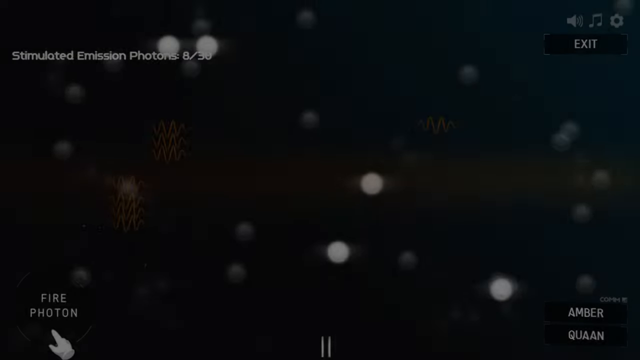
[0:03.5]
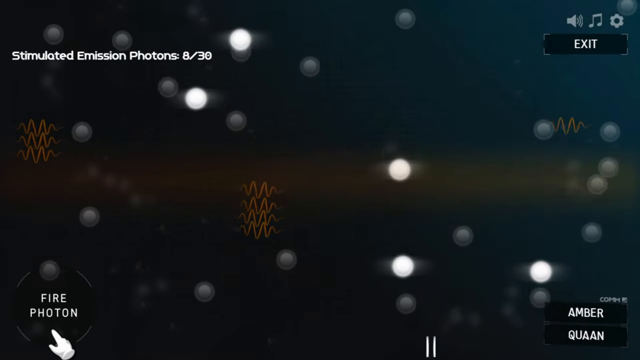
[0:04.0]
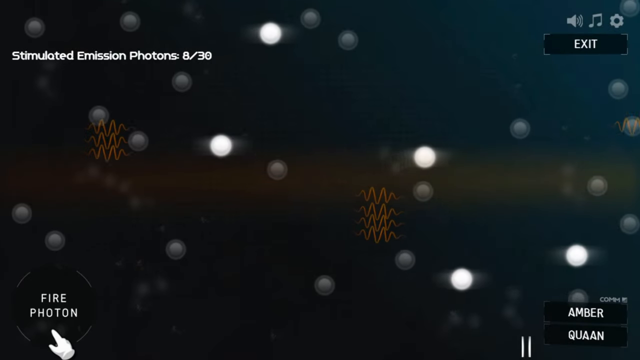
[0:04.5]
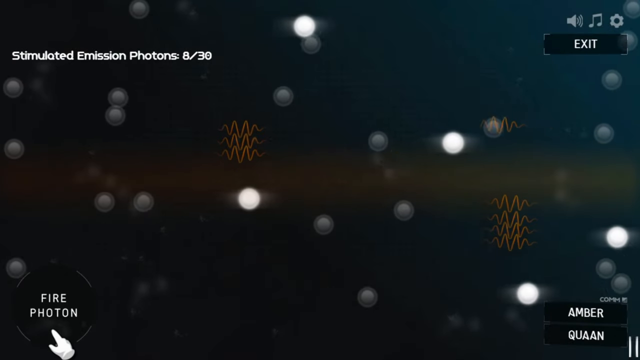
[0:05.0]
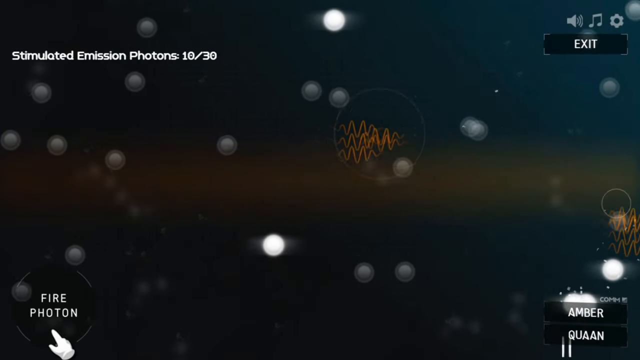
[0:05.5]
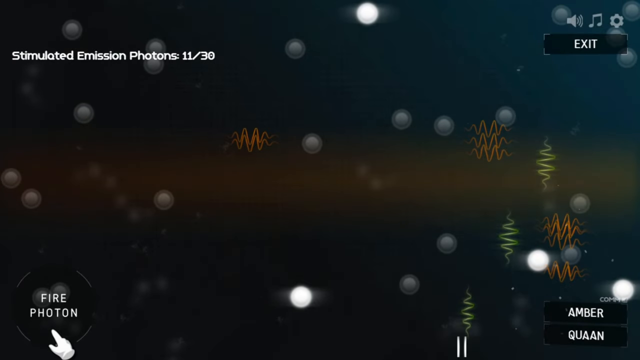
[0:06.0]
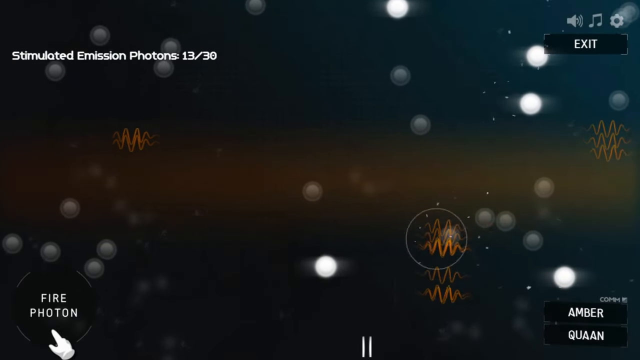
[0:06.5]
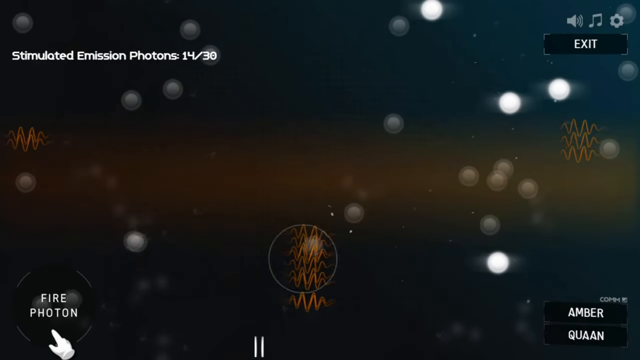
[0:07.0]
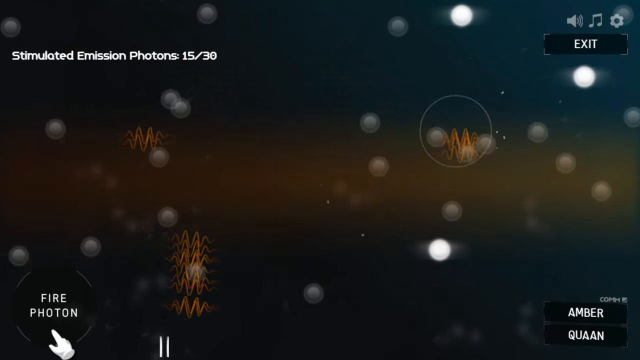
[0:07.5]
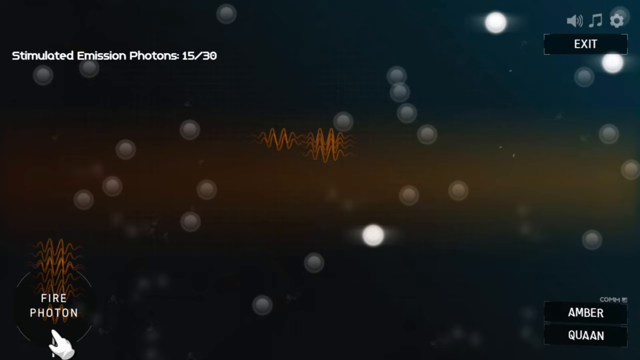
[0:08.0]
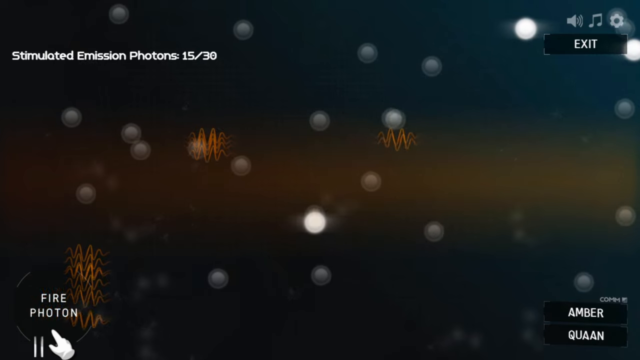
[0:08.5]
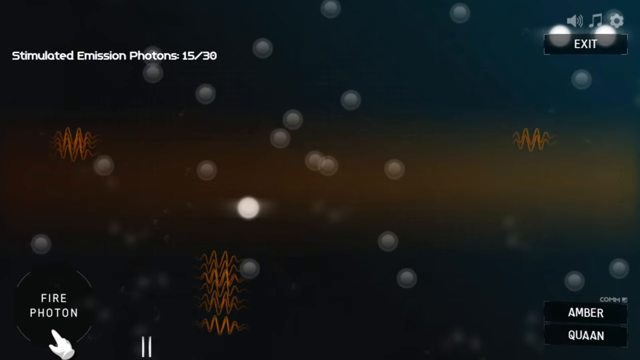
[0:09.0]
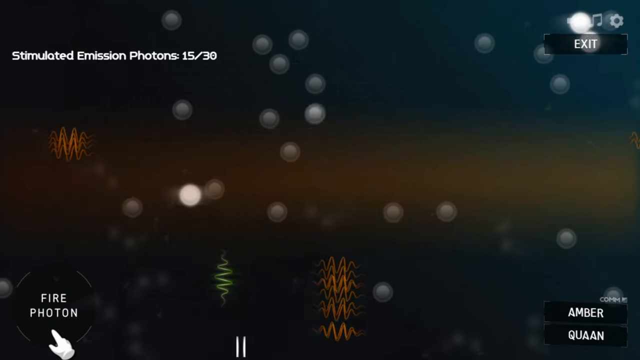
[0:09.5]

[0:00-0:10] The video begins with a black screen on which white lights fade in at random places. In the upper right-hand corner, white writing reads "simulated emission photons" with a count out of 30. White writing in the bottom left reads "fire photon", the bottom right corner reads "Amber Juan", and the upper right corner reads "Exit". The white circles move around continuously in the background. Wavy lines also begin to appear and move around; some are red and others are more yellow. The yellow zigzags tend to shoot very quickly upward from the bottom toward the top, while the red zigzags move across the screen, some left to right and others right to left, with no real pattern to their movements.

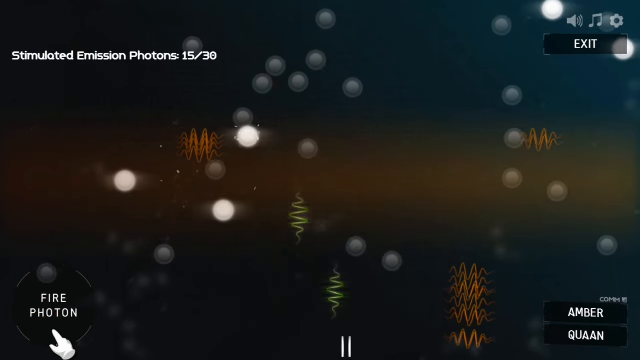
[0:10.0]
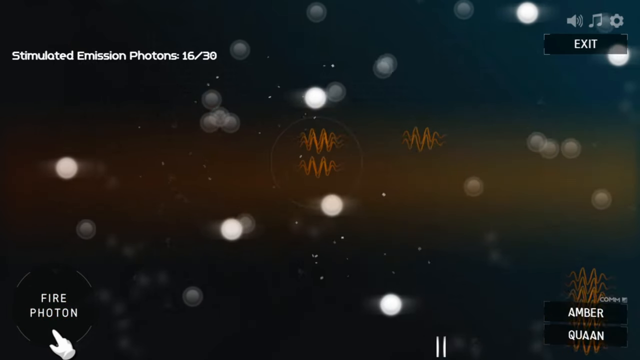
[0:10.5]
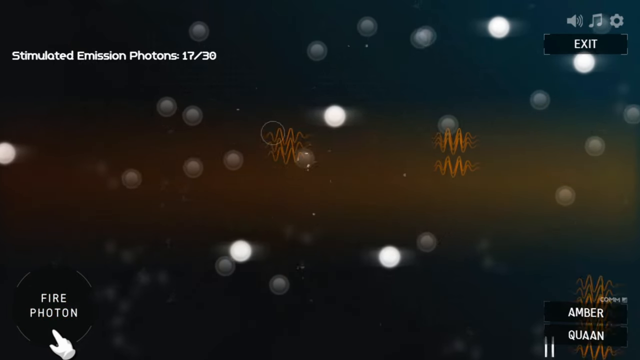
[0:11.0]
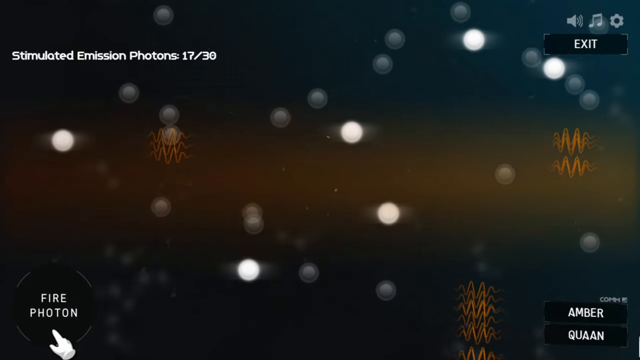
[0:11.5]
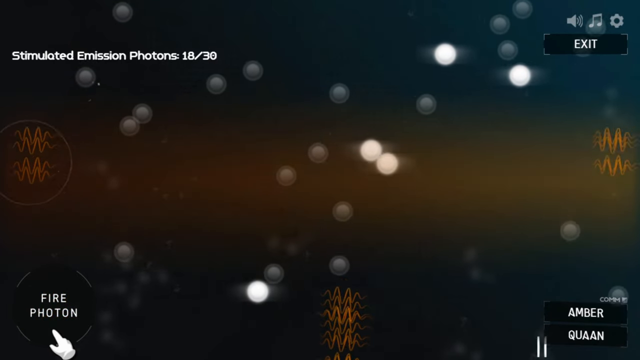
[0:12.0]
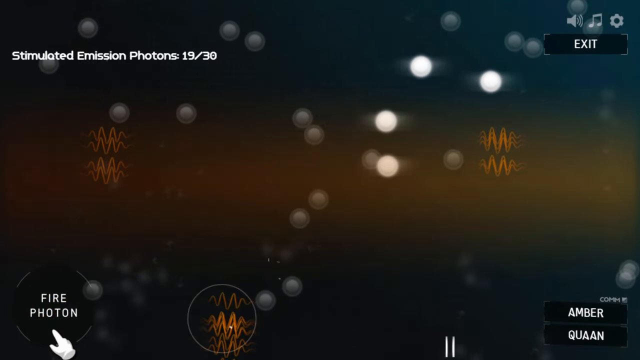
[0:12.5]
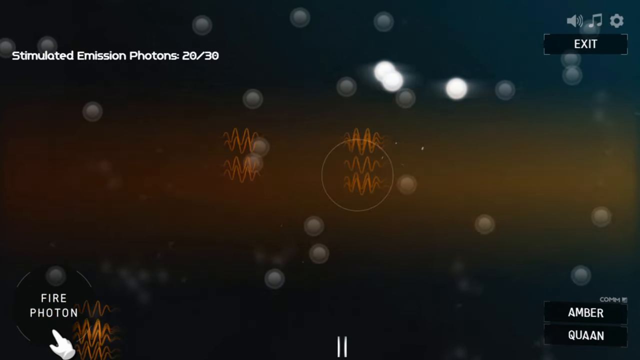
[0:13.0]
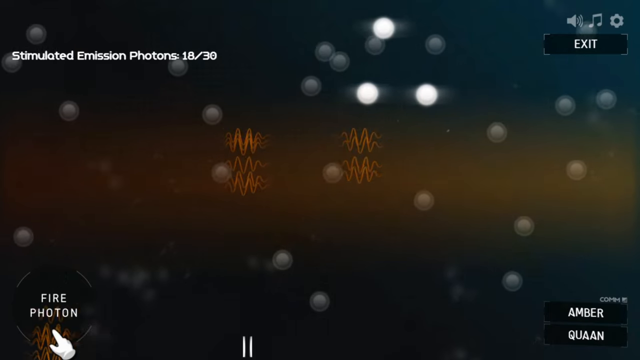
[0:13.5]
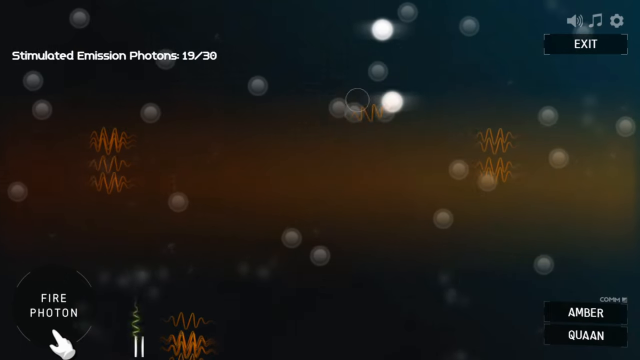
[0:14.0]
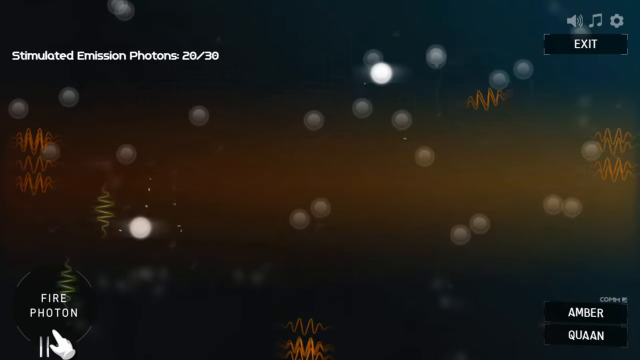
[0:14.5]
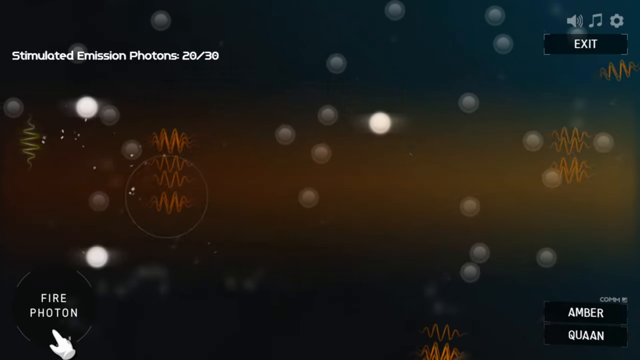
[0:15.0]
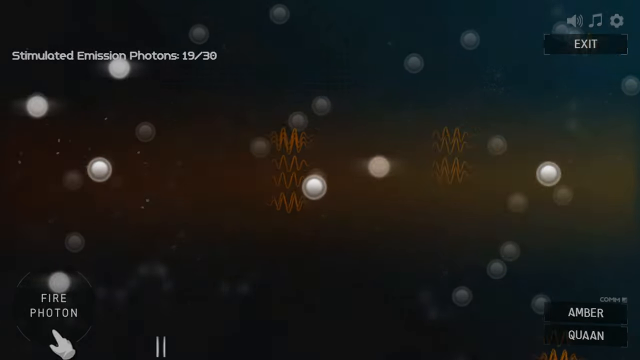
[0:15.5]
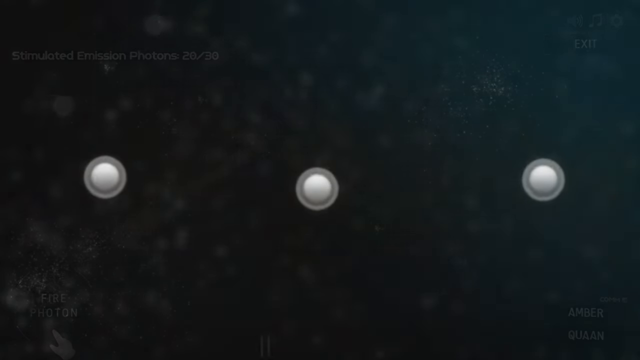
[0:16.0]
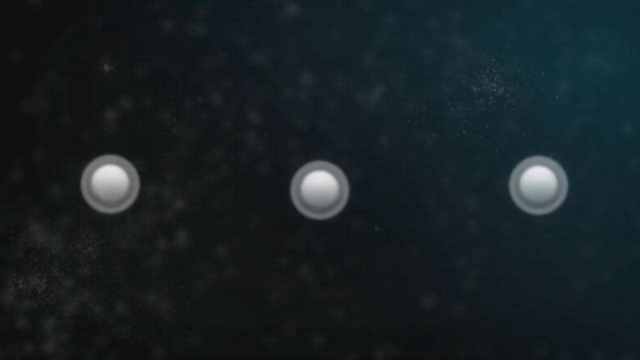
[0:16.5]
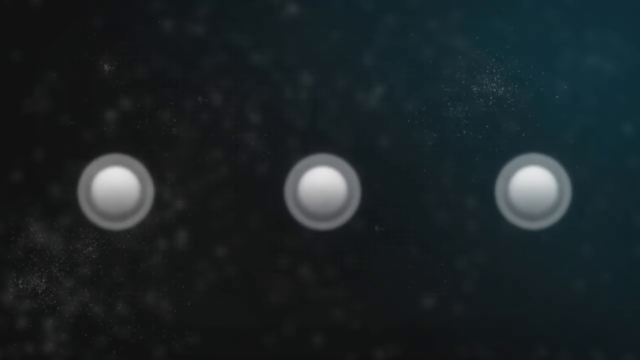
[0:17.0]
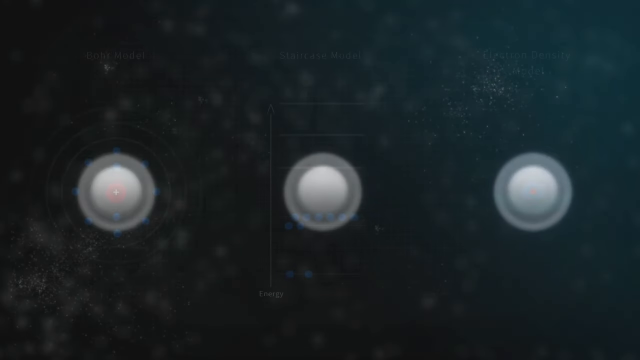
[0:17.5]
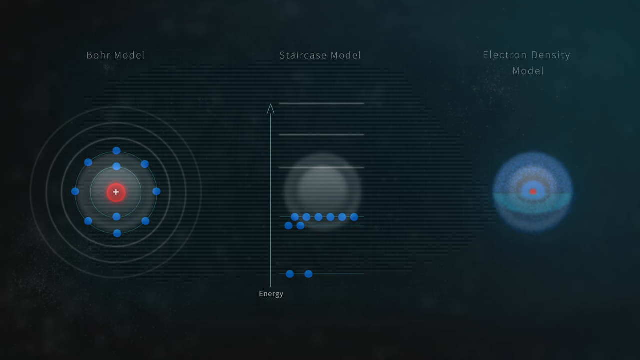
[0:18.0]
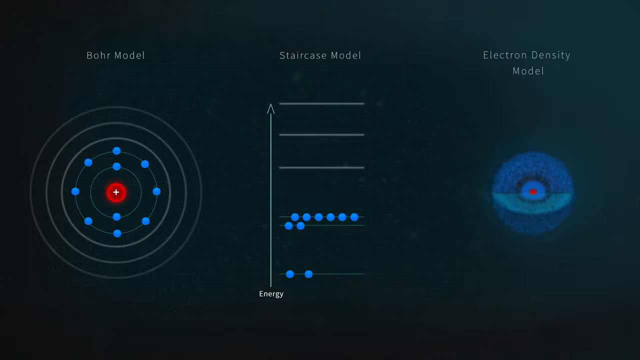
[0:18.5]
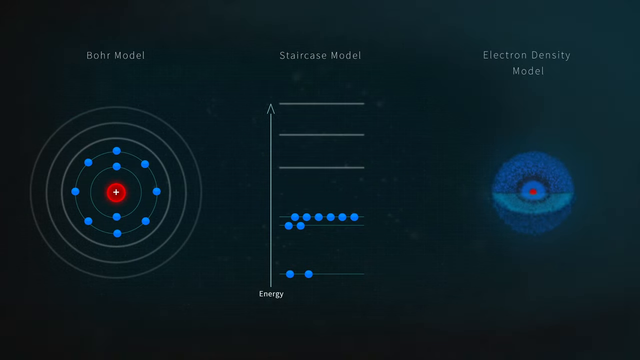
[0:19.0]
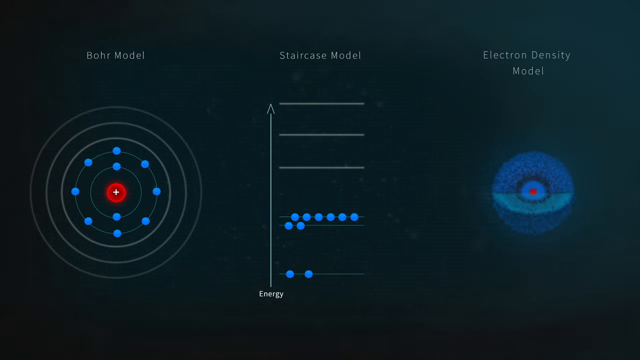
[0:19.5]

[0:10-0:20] White circles move continuously on a black screen, and red zigzag lines move intermittently across it from left to right or right to left. In the upper right-hand corner, white writing reads "simulated emissions photons" with a count out of 30. There is writing in the other corners: "exit" in the upper right, "amber Quan" in the lower right, and "fire photon" in the lower left, along with a hand-shaped cursor. After a few seconds, three of the white lights begin to grow while everything else fades out. The lights move to line up in a vertical line across the center of the screen, growing until a lighter circle begins to form around them. The left-hand circle transitions into blue and spreads out to form dots in a circle, with a red circle in the center and three concentric white circles on the outside. The middle dot remains very faintly visible in the background, while in the foreground is a diagram with an arrow pointing up on the left-hand side, three horizontal lines at the top, and small blue dots forming lines on the two lines at the bottom. The right-hand dot turns into a solid blue circle that looks like a 3D sphere with a slice cut out of it, with layers visible going down to a red core in the center.